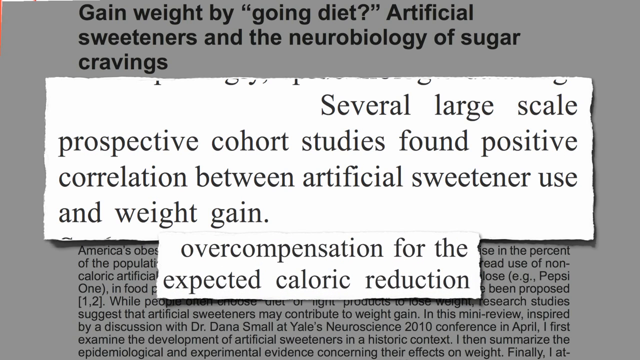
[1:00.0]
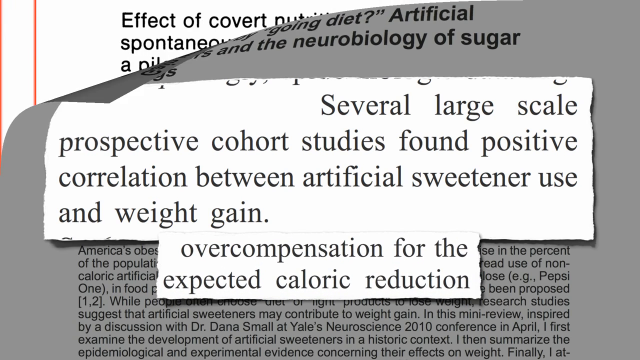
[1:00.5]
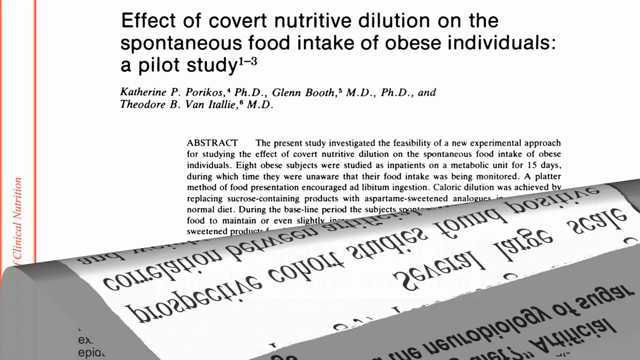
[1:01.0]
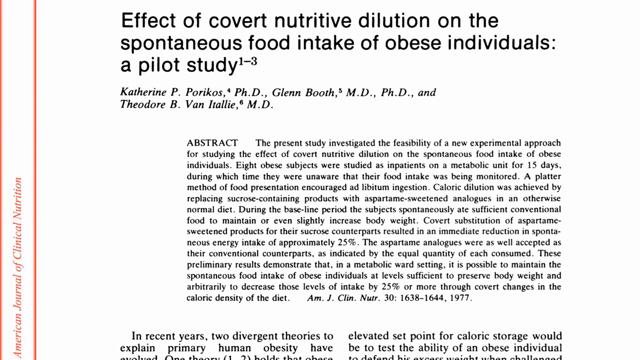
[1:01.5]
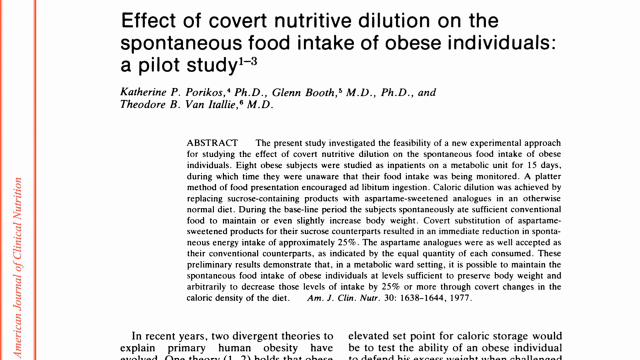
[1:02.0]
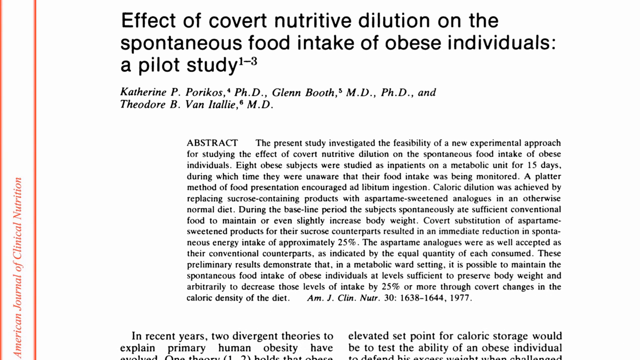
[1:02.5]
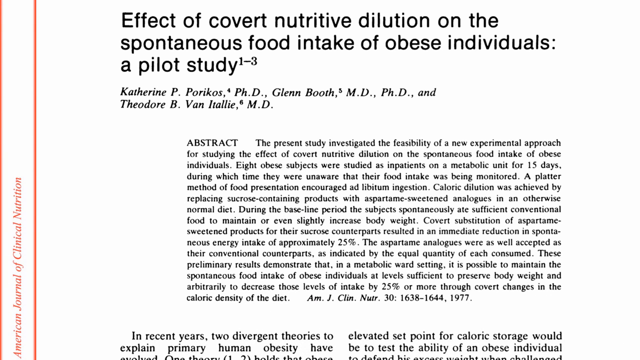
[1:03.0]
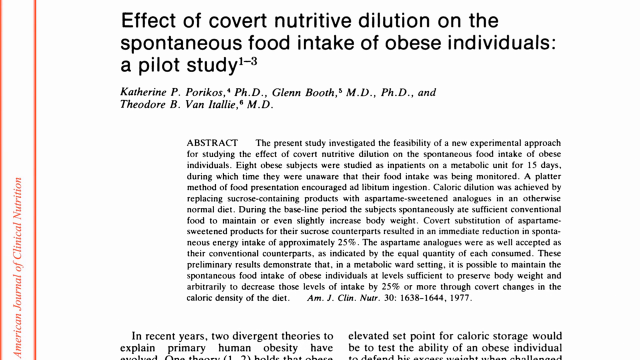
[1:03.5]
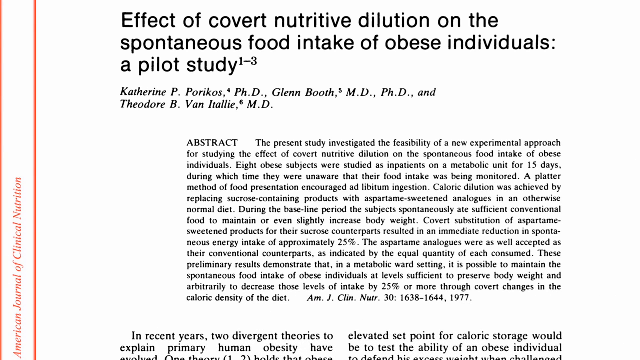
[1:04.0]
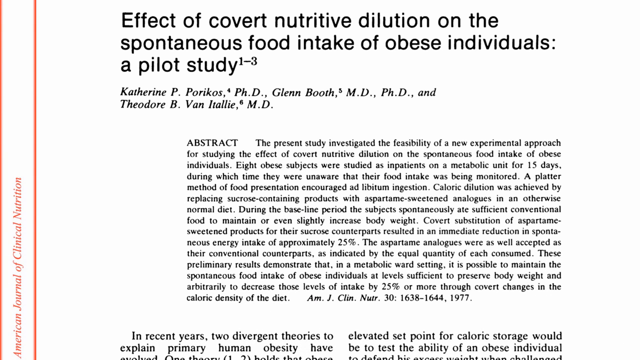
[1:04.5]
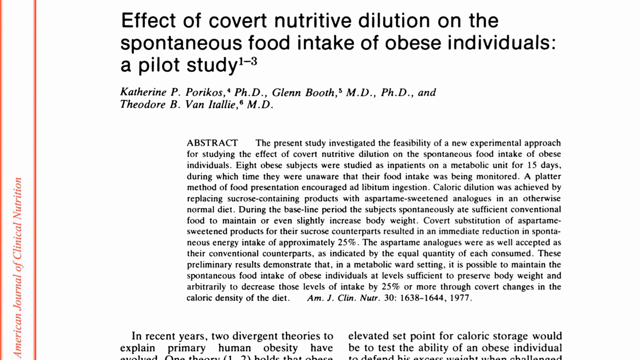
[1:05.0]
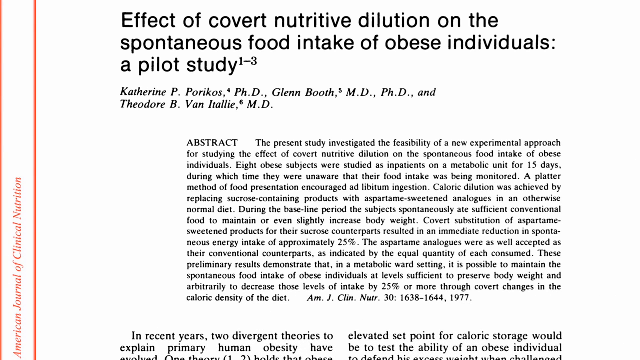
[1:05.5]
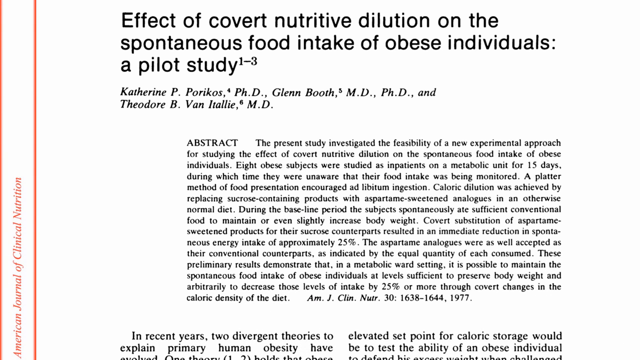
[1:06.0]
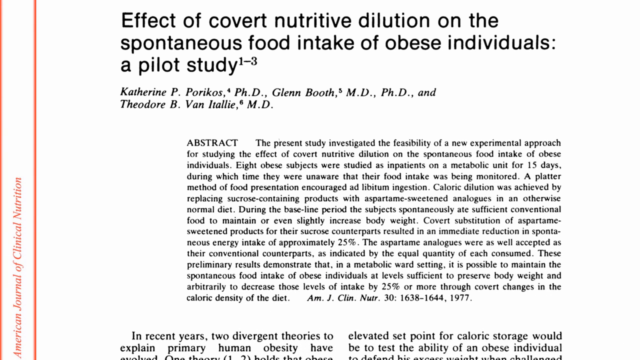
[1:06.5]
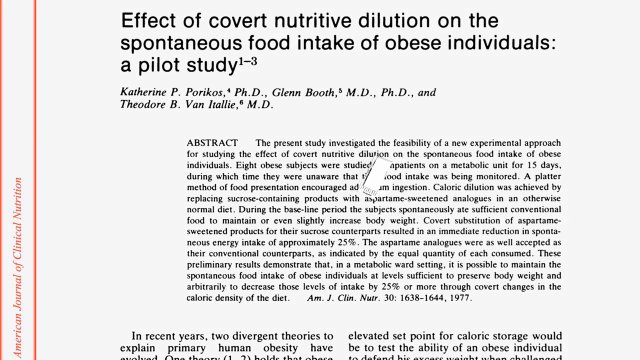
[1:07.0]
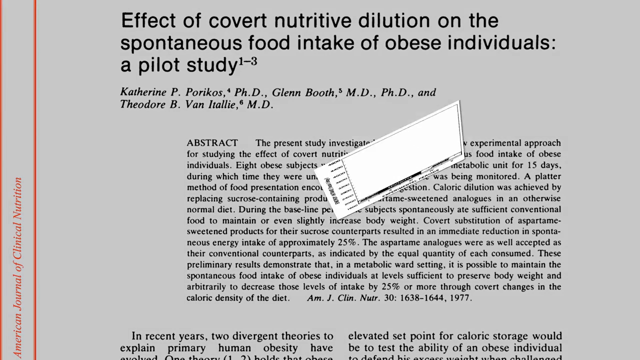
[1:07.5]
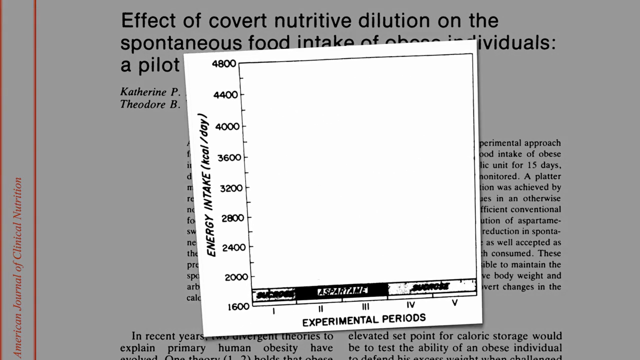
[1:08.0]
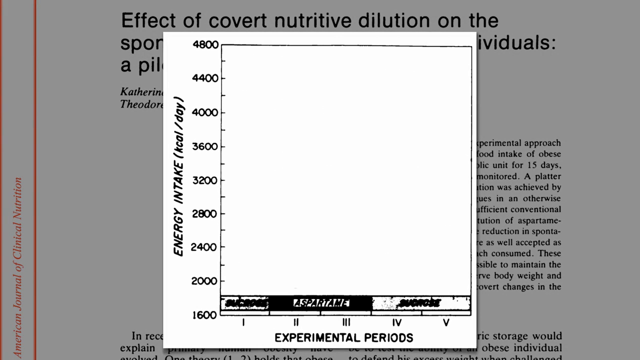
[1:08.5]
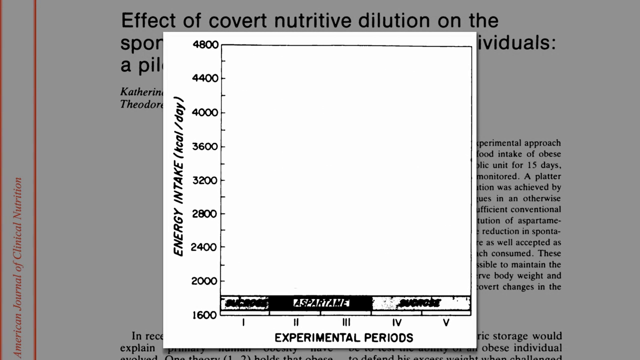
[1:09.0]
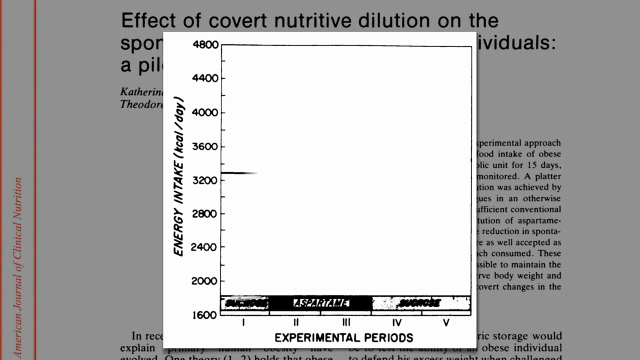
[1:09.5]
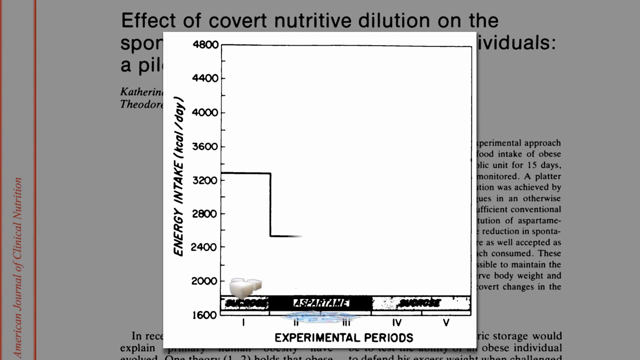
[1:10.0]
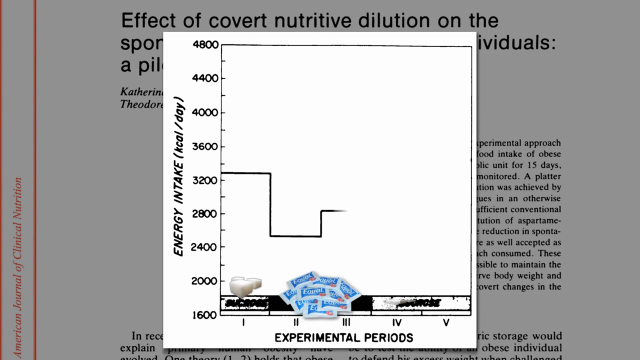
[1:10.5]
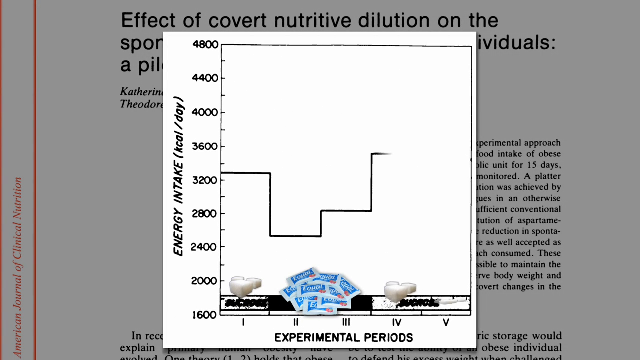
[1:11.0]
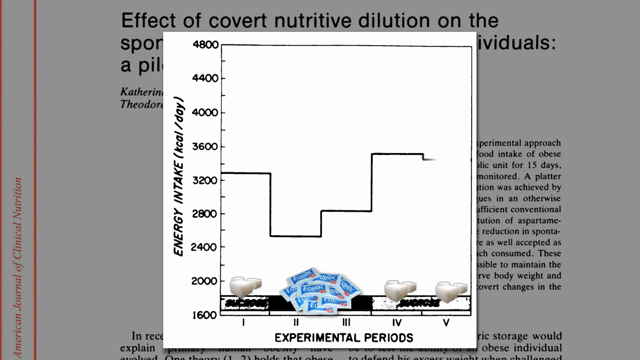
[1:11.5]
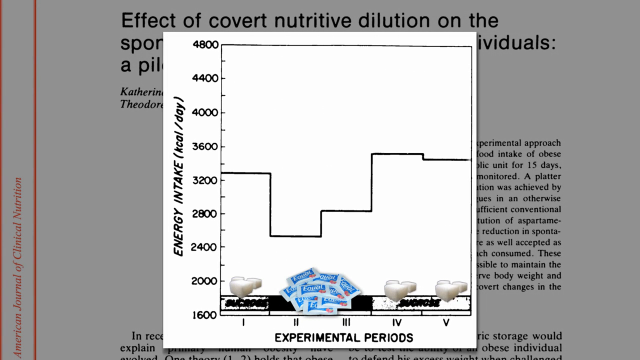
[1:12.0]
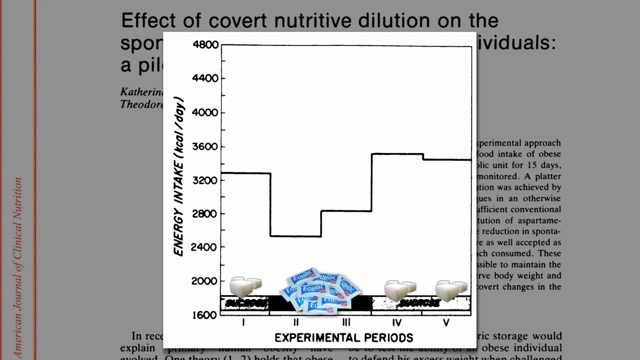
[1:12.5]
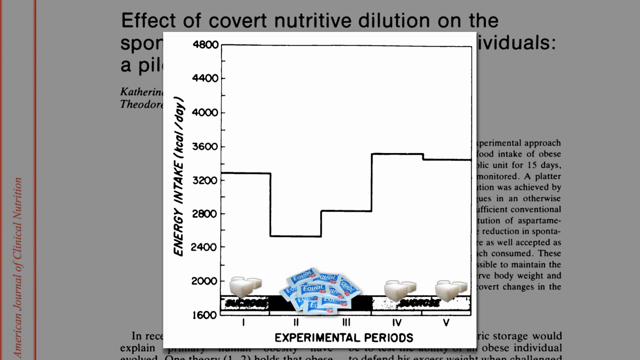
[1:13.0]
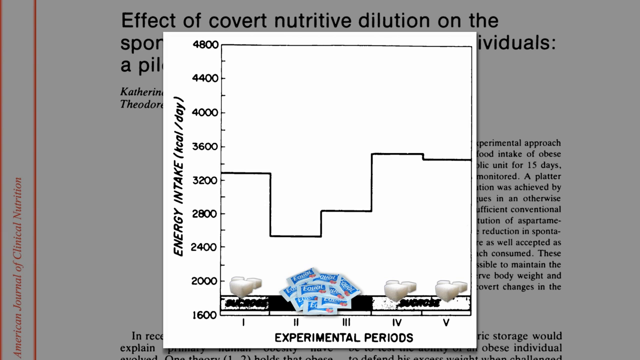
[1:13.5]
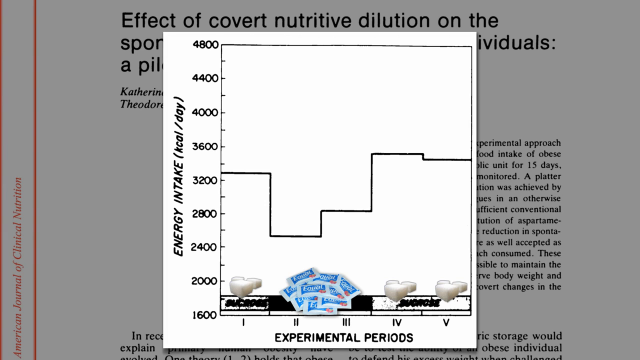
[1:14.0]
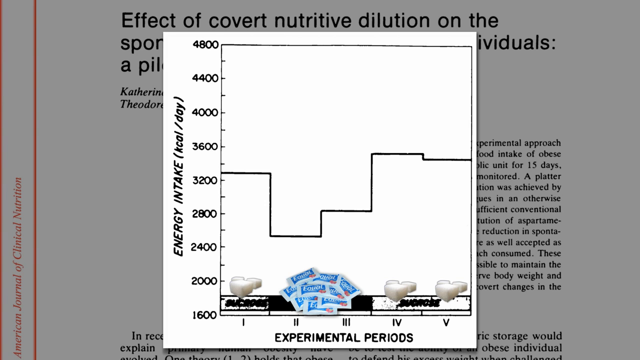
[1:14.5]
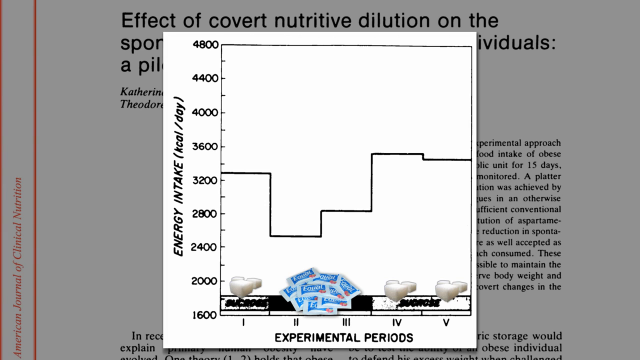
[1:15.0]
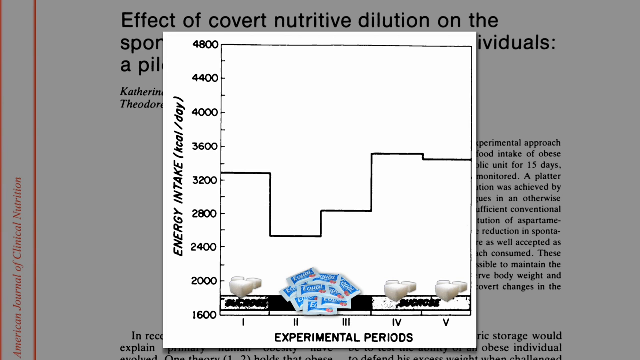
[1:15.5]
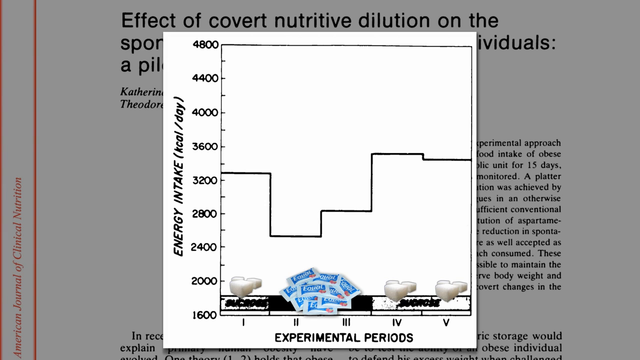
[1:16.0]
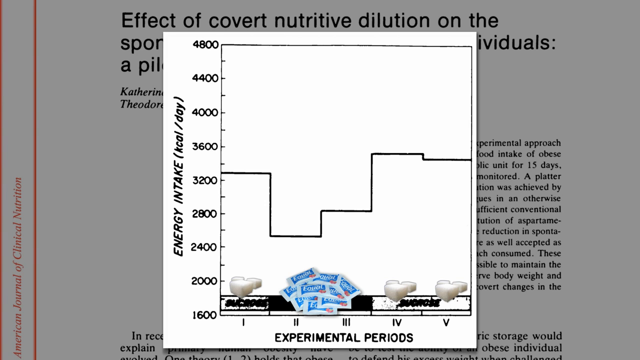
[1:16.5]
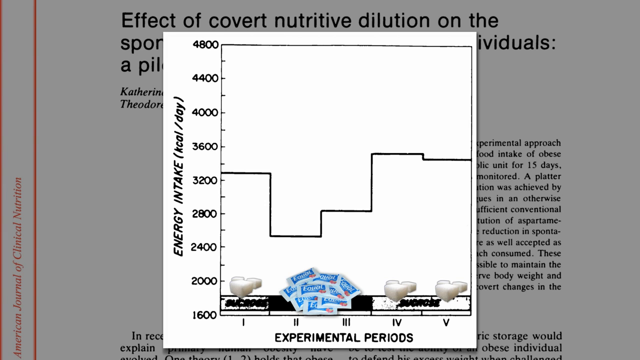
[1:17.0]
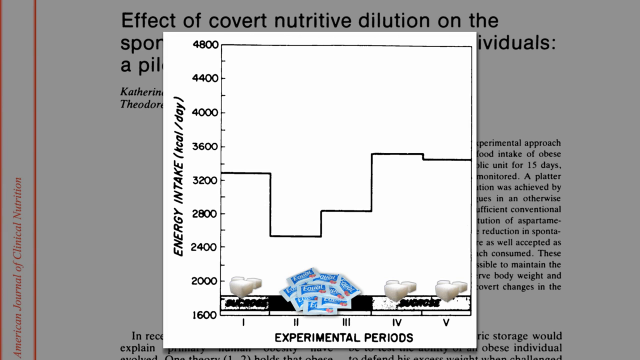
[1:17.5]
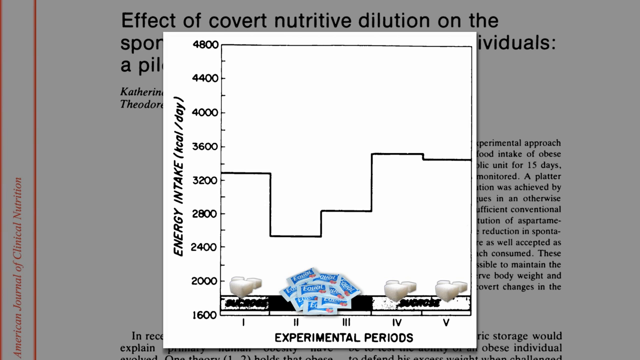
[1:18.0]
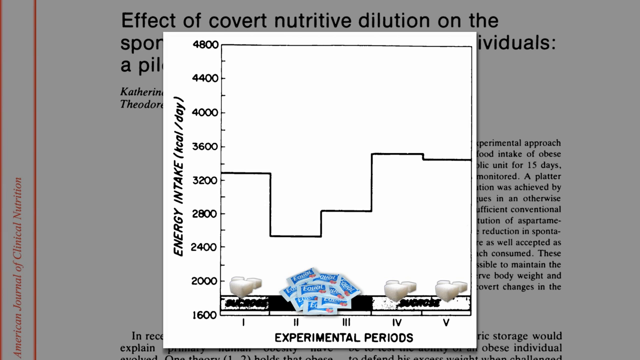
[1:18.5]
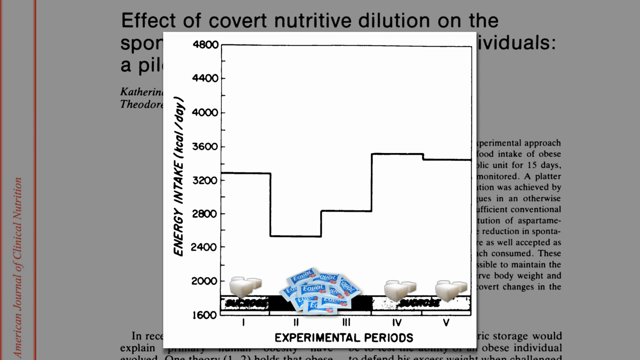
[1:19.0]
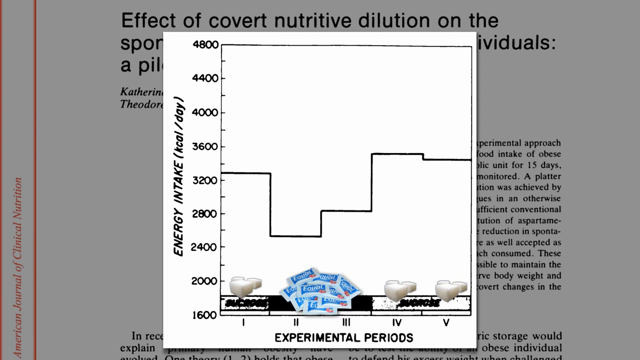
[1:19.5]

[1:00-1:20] Quotes from the Yale article about artificial sweeteners continue. A swiping effect then brings up an entirely different article from the Journal of Clinical Nutrition, titled "Effect of covert nutritive dilution on the spontaneous food intake of obese individuals." According to the text, the study investigated the feasibility of a new experimental approach for studying covert nutritive dilution in obese people. Eight obese subjects were placed in a unit without knowing that their food intake was being monitored. Caloric dilution was achieved by replacing sucralose-containing products with aspartame-sweetened analogues, and replacing sugar with artificial sweeteners resulted in an immediate reduction in spontaneous energy intake of approximately 25%. A graph then appears. It seems to show daily energy intake dropping from over 3,200 kilocalories to 2,500 in the short term, followed by a longer-term increase to levels higher than the initial amount.